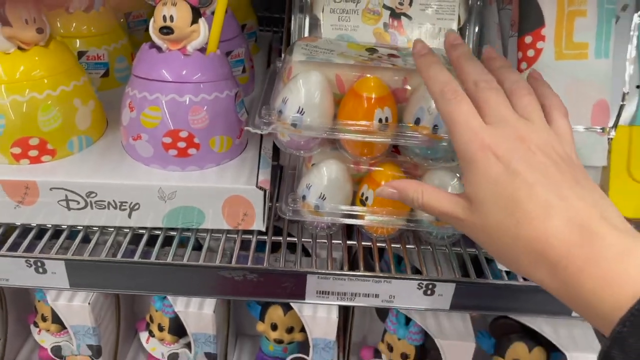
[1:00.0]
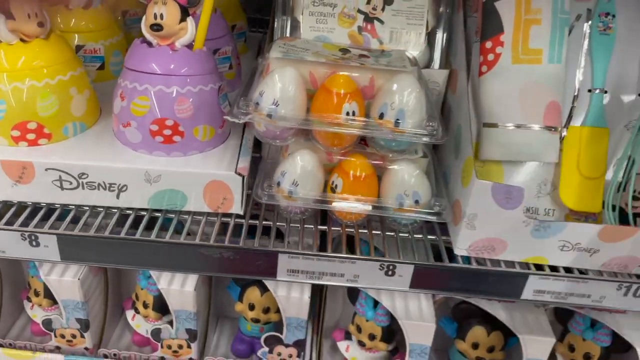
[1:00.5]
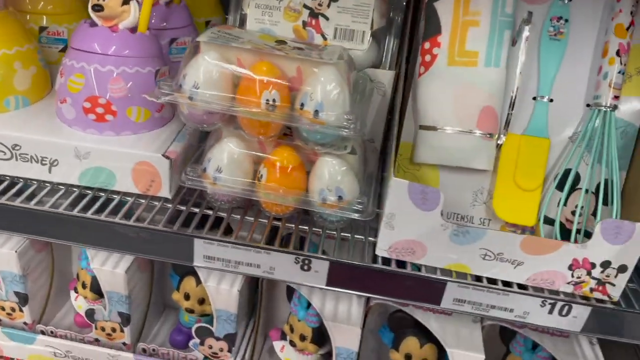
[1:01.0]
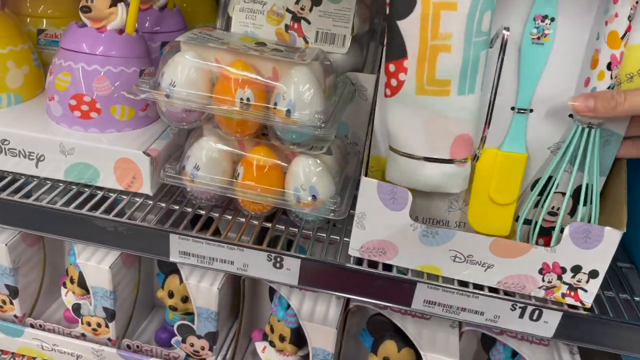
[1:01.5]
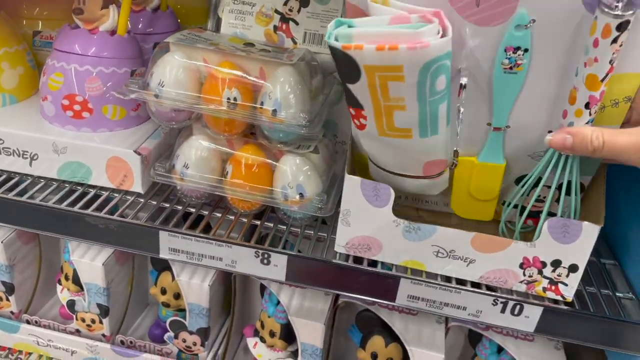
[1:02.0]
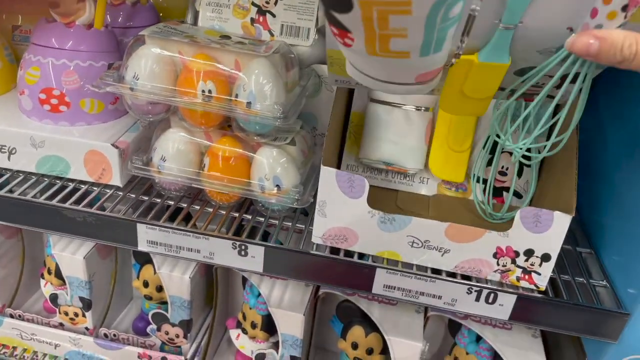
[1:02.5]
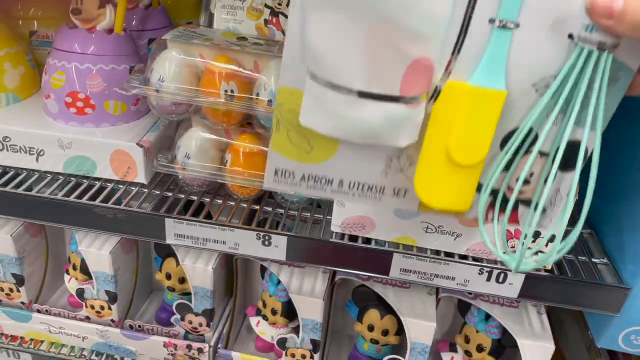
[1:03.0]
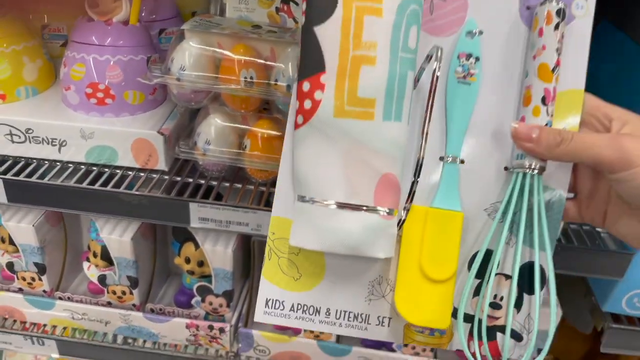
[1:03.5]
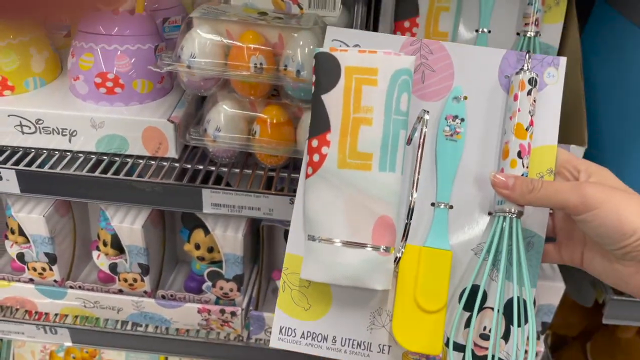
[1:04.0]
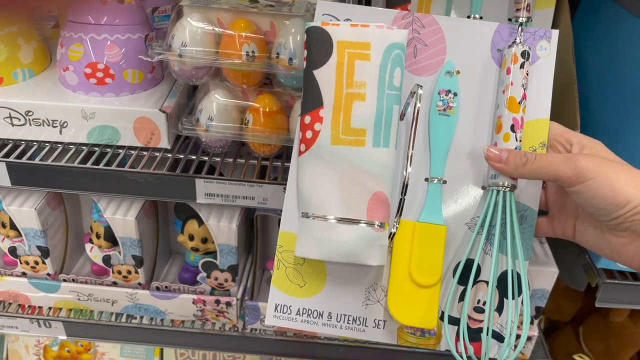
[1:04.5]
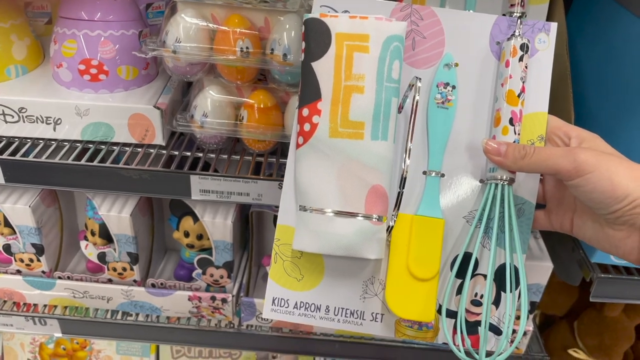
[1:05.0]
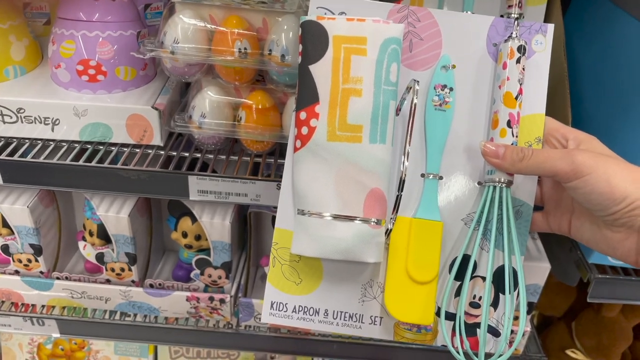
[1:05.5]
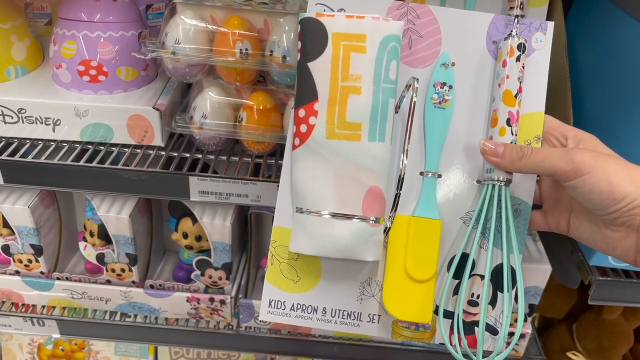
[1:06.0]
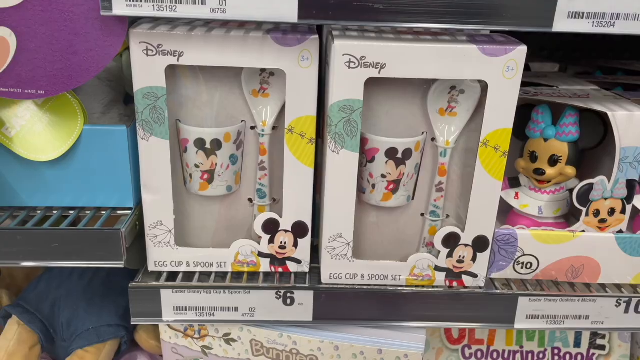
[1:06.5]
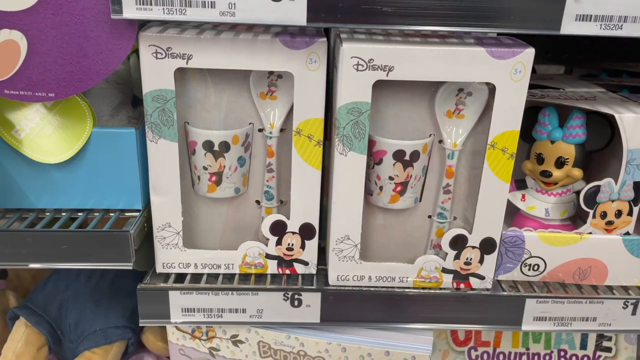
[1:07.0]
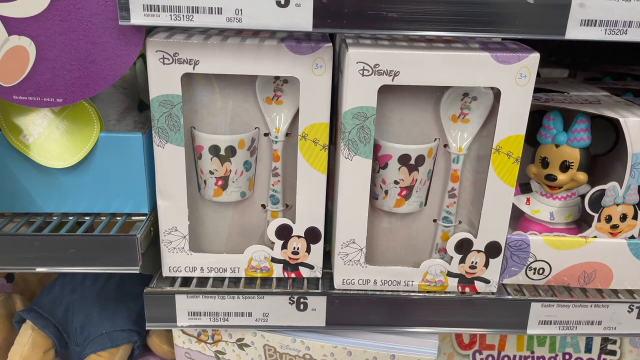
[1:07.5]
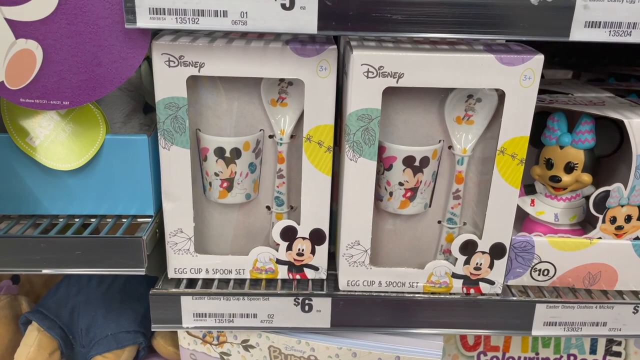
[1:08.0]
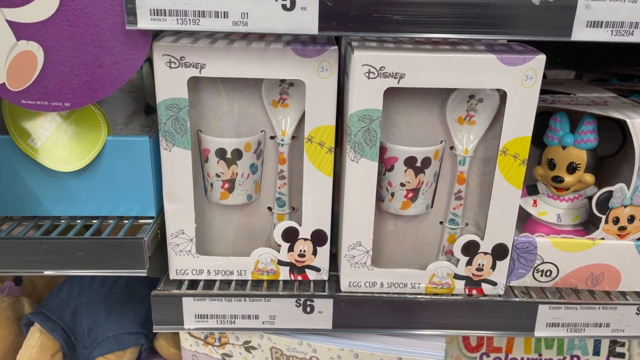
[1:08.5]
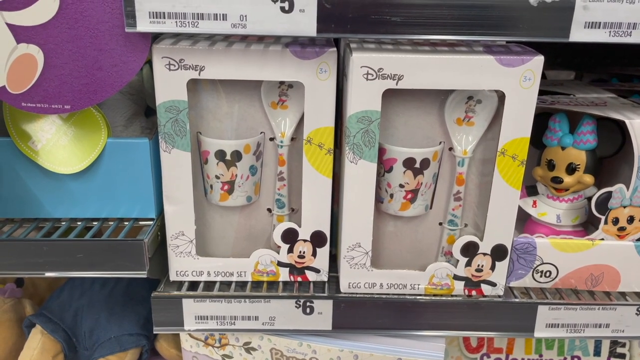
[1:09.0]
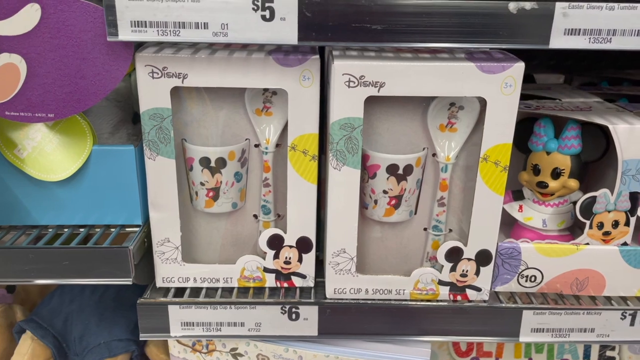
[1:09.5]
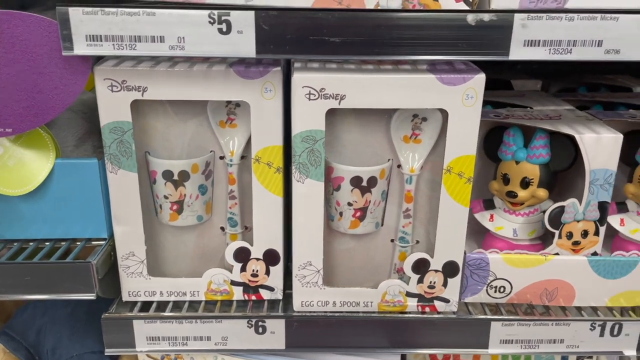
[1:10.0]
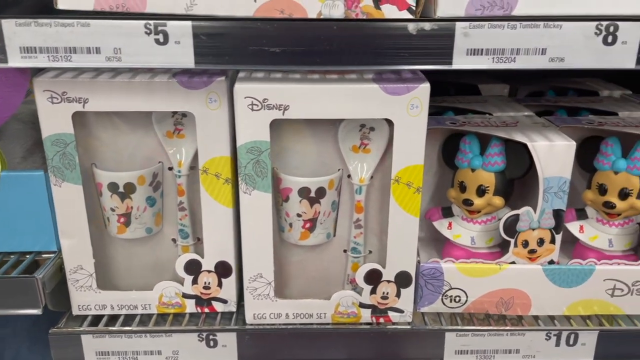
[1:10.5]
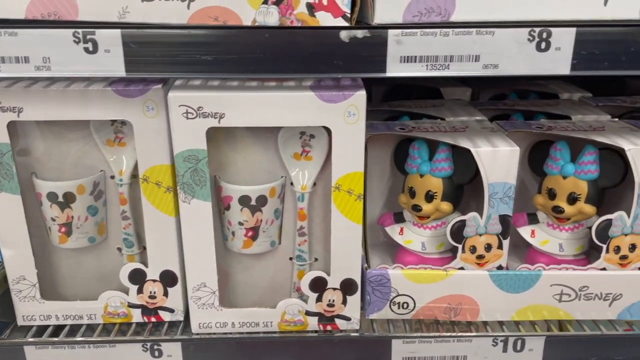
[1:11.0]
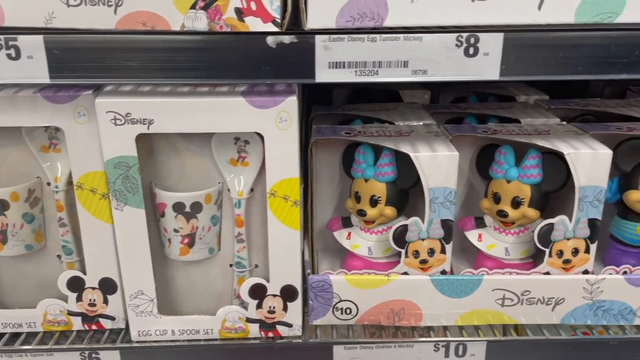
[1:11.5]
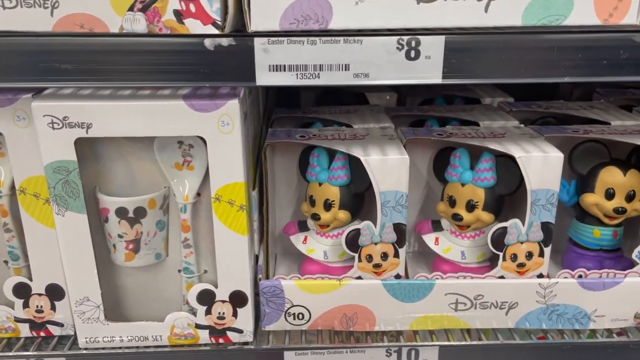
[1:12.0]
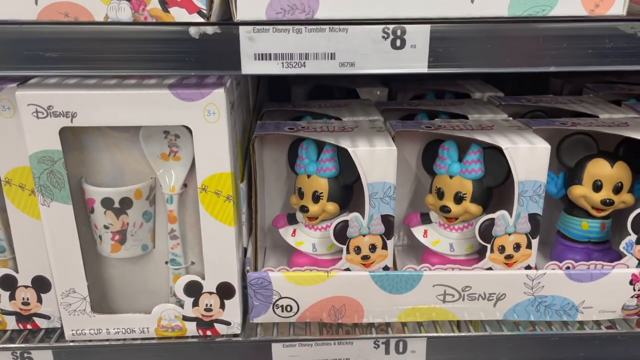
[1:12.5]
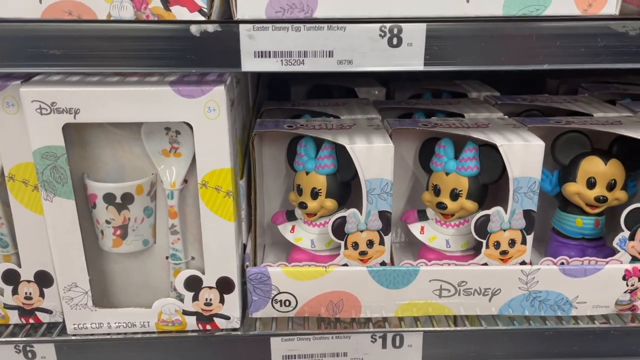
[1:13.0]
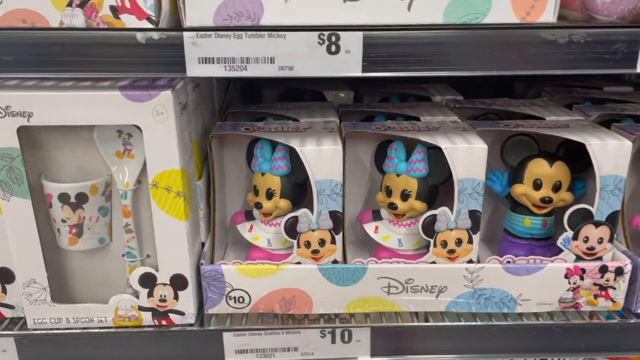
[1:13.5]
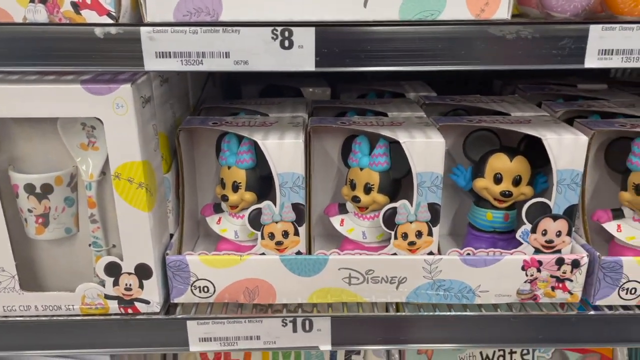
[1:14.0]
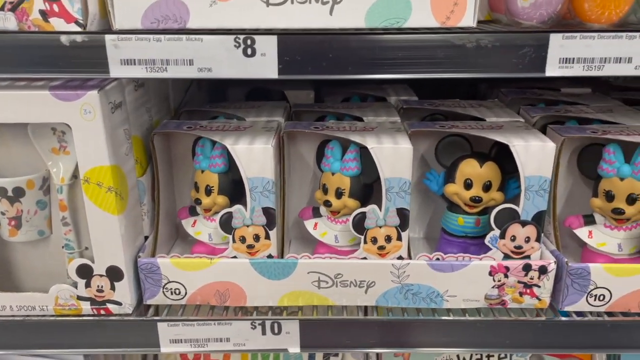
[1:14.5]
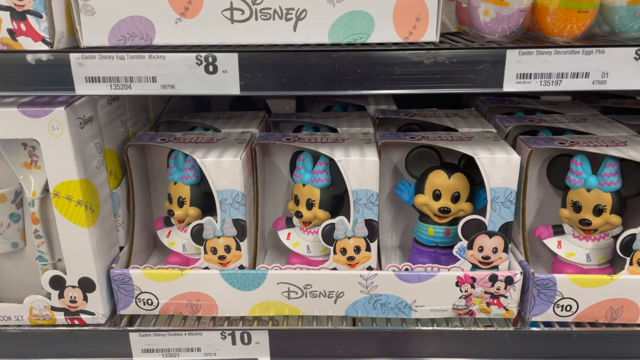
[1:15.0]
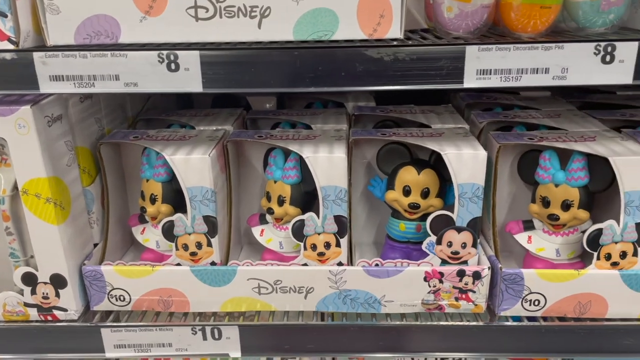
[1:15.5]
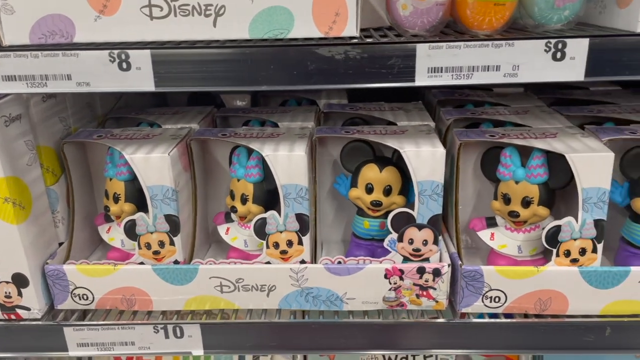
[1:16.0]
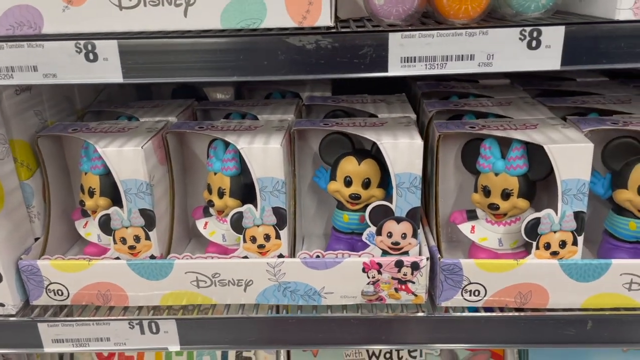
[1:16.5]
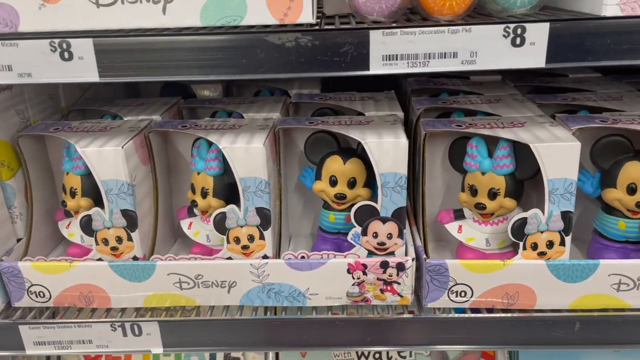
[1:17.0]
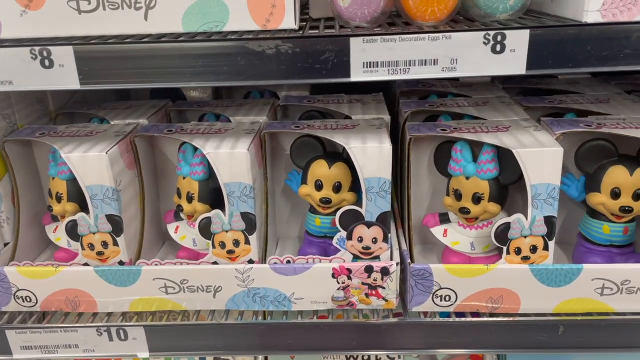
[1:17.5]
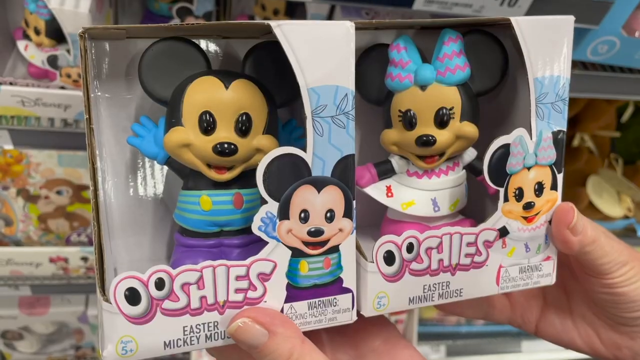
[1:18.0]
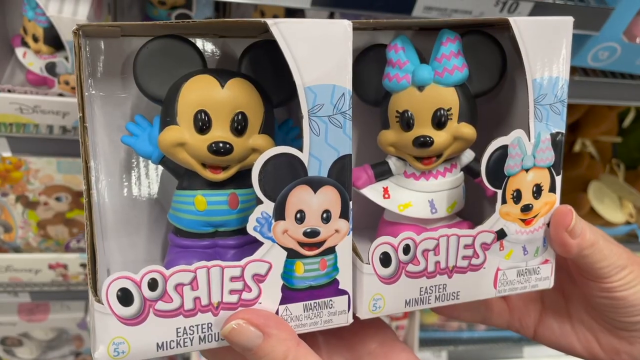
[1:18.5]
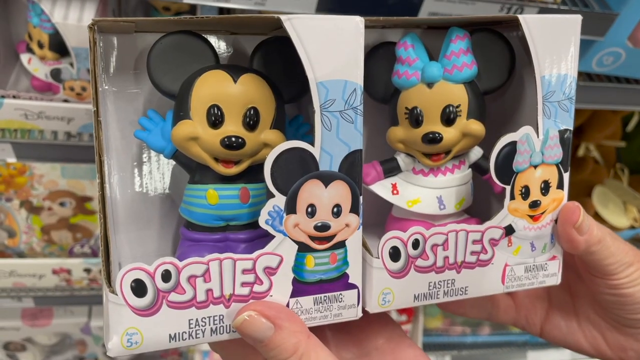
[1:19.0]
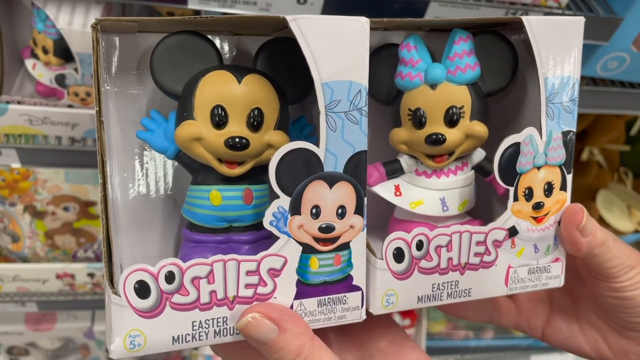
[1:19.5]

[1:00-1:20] The person puts the product back down and picks up the next one, what looks like a Disney-themed cooking set with utensils such as a whisk, a rubber scraper, and maybe an oven mitt. Another cooking set is then shown, apparently a Disney set that comes with what looks like a spoon and a mug. The camera pans toward more Disney items that seem to feature Miss Mickey and Mickey Mouse: small, cute toy-like products with the name "Ooshies" on them, showing Easter-themed Minnie Mouse and Mickey Mouse. The person picks them up and views them up close. The setting remains the toy aisle.